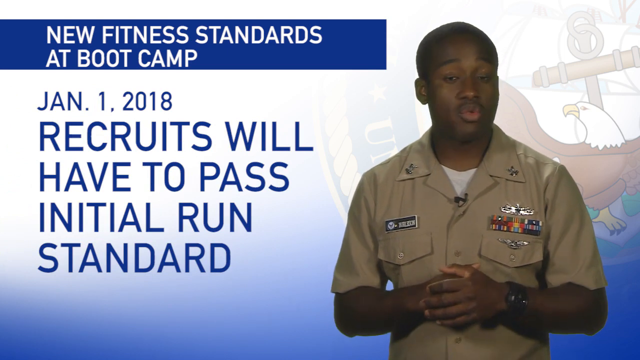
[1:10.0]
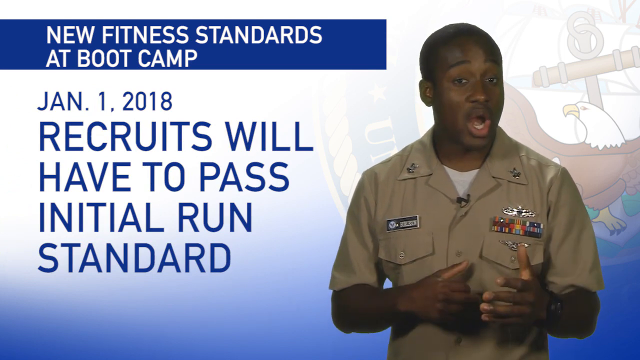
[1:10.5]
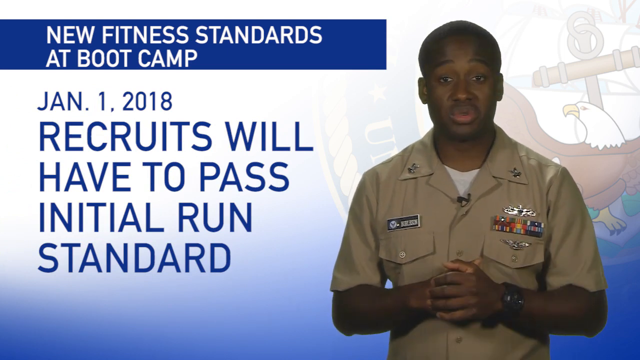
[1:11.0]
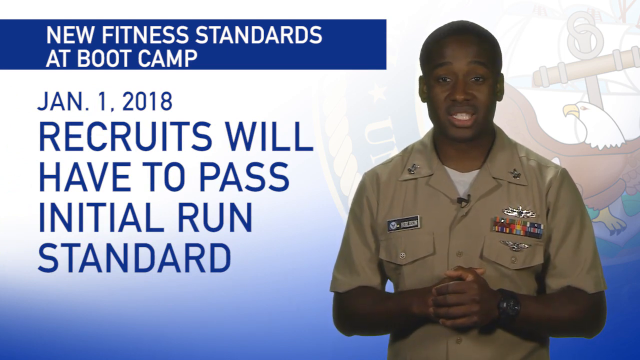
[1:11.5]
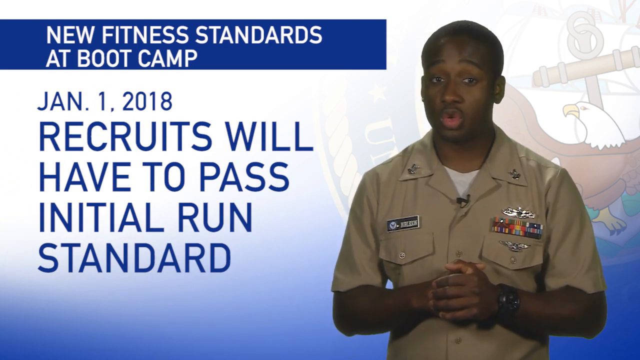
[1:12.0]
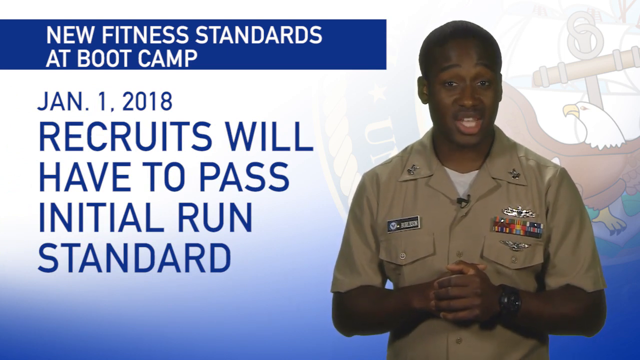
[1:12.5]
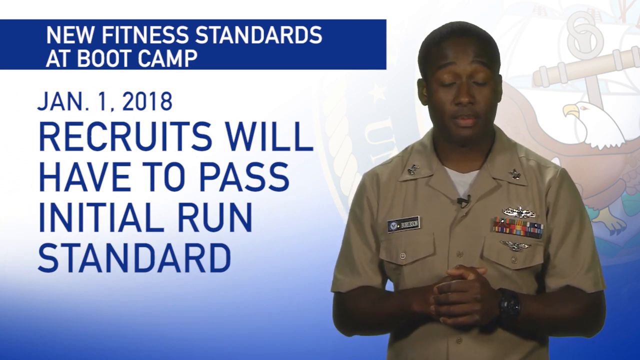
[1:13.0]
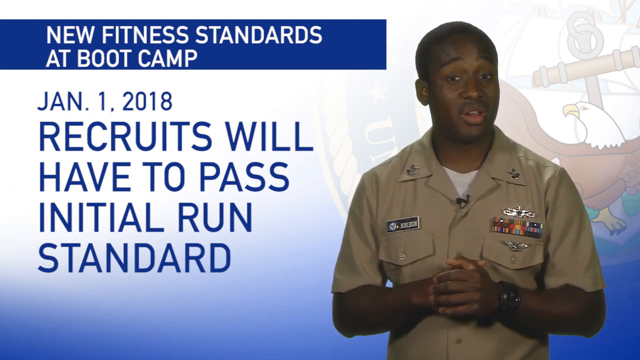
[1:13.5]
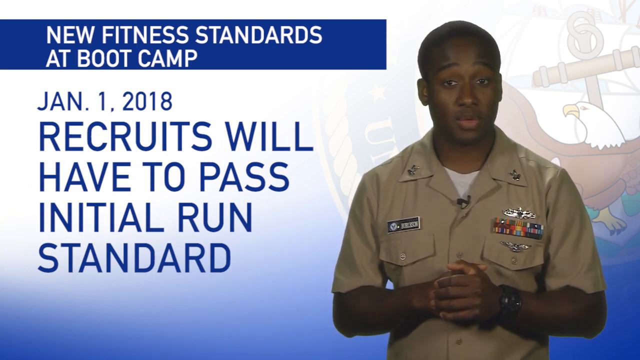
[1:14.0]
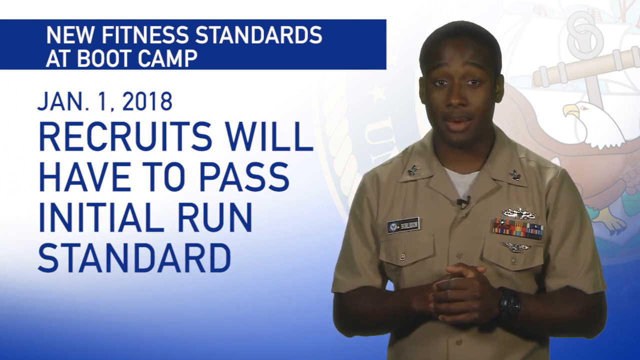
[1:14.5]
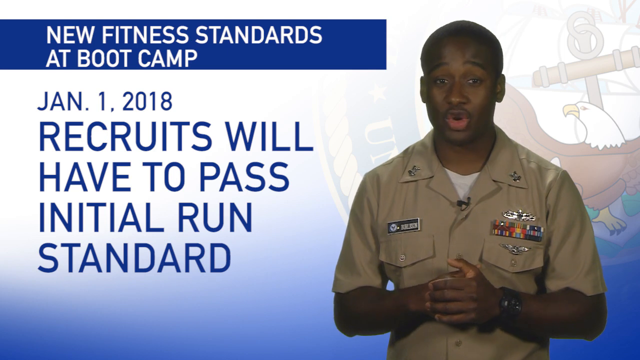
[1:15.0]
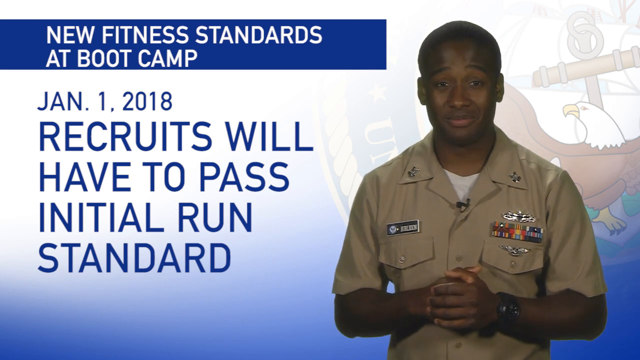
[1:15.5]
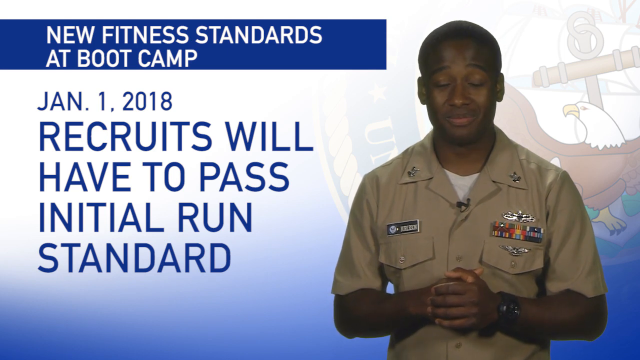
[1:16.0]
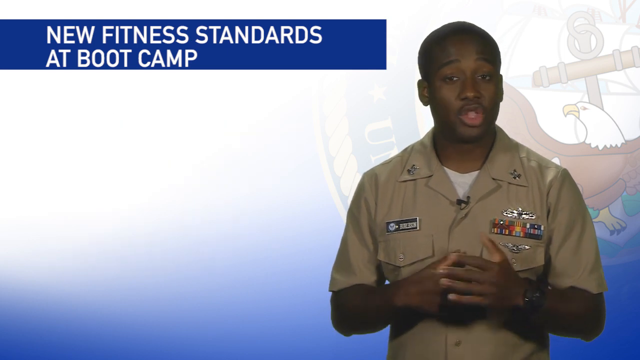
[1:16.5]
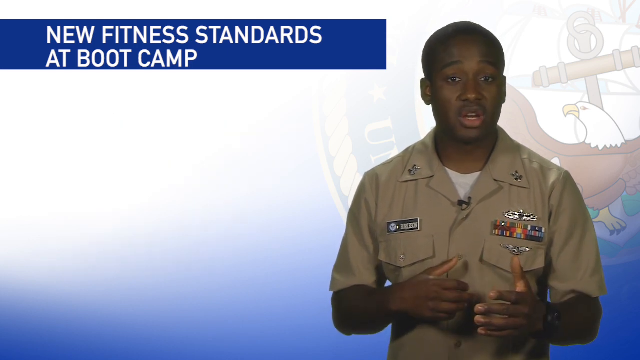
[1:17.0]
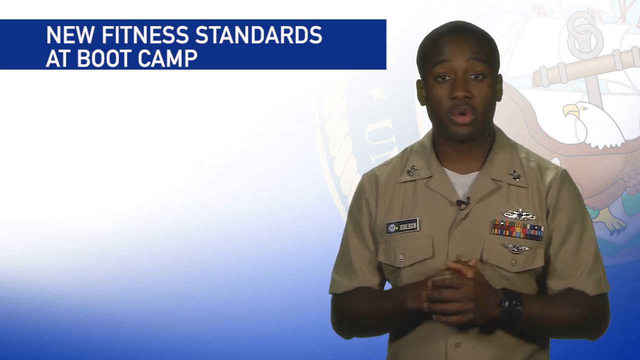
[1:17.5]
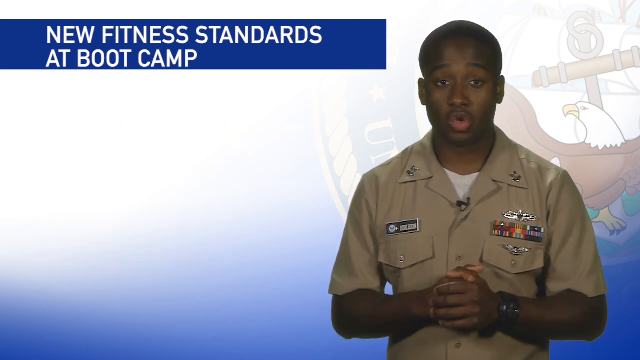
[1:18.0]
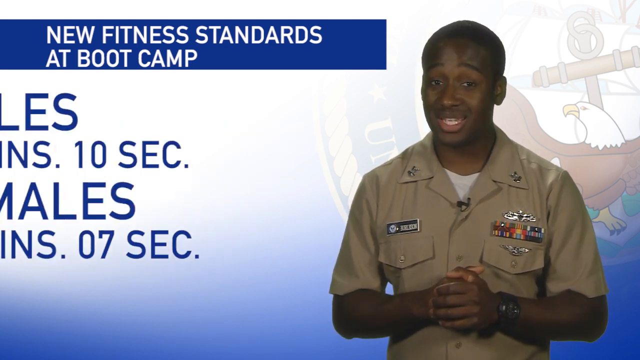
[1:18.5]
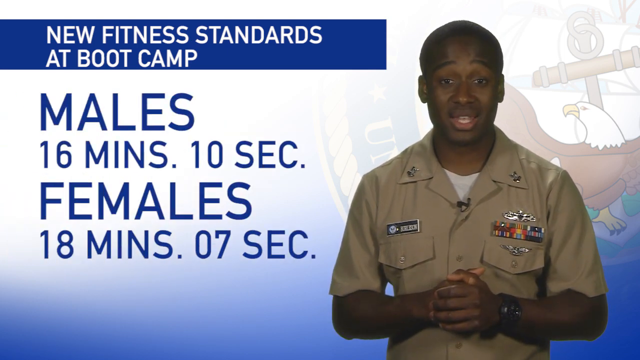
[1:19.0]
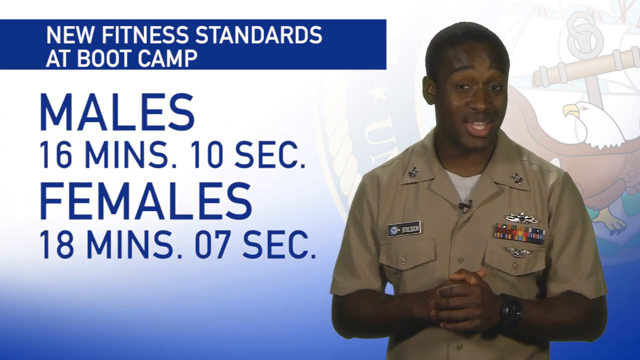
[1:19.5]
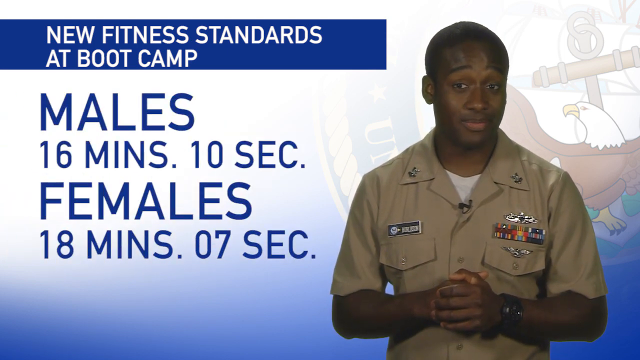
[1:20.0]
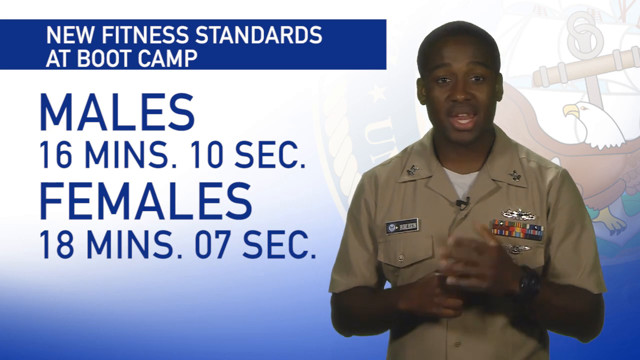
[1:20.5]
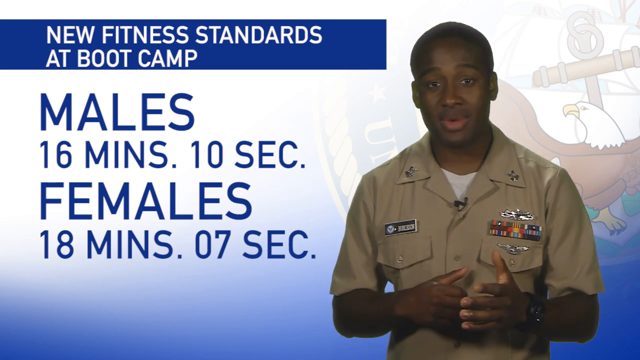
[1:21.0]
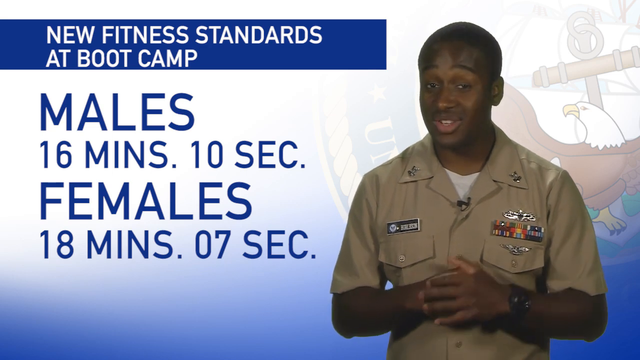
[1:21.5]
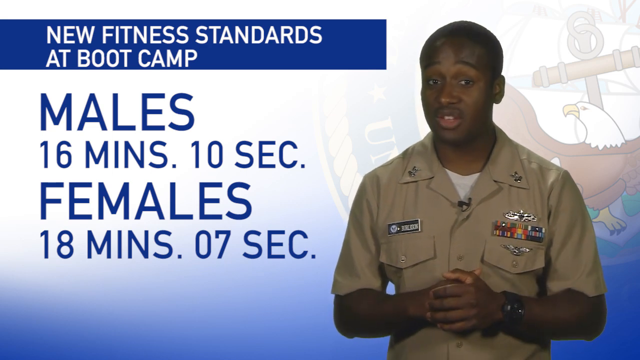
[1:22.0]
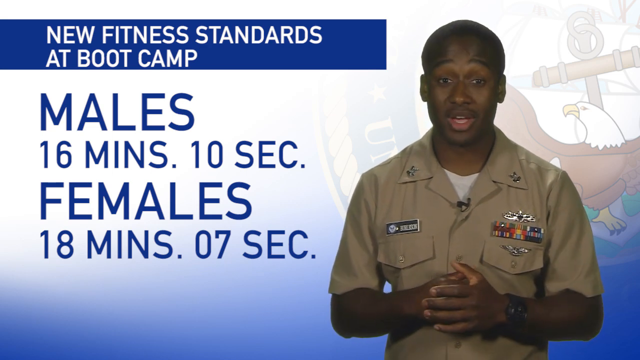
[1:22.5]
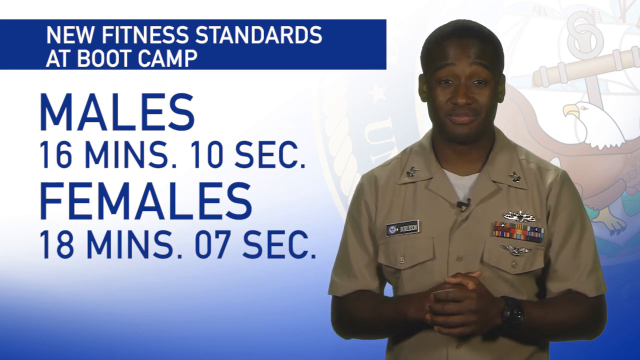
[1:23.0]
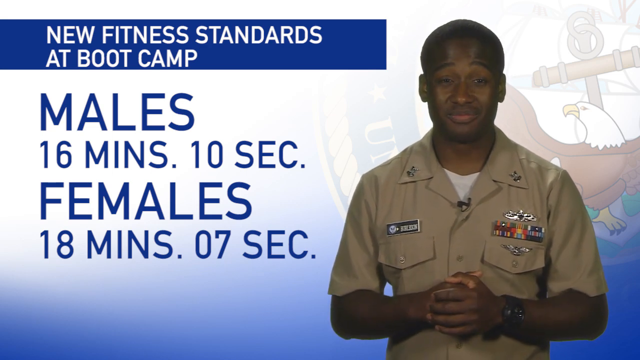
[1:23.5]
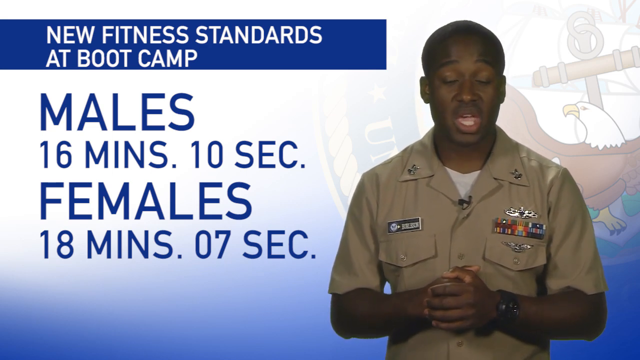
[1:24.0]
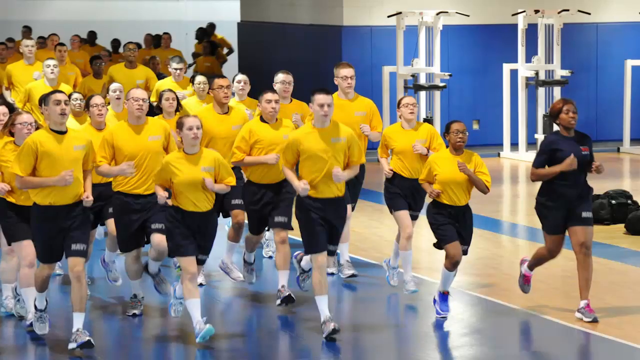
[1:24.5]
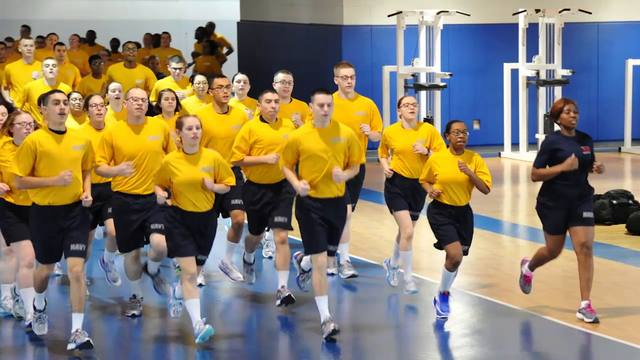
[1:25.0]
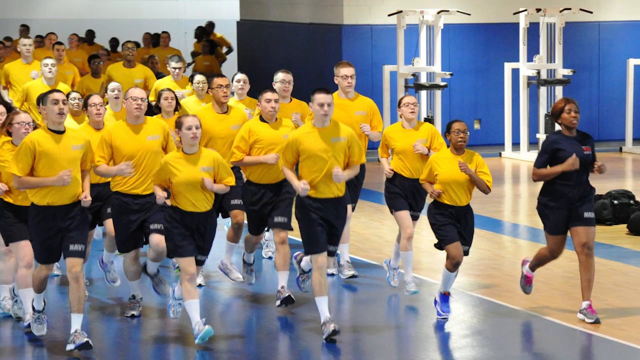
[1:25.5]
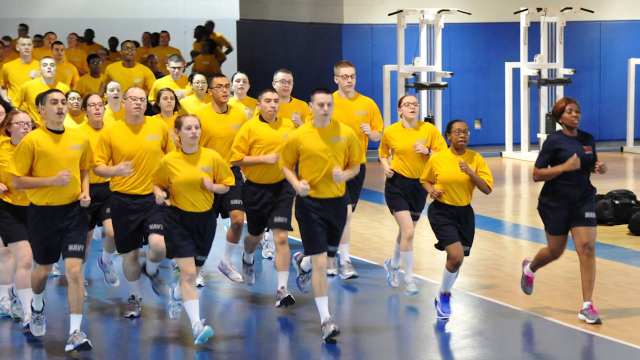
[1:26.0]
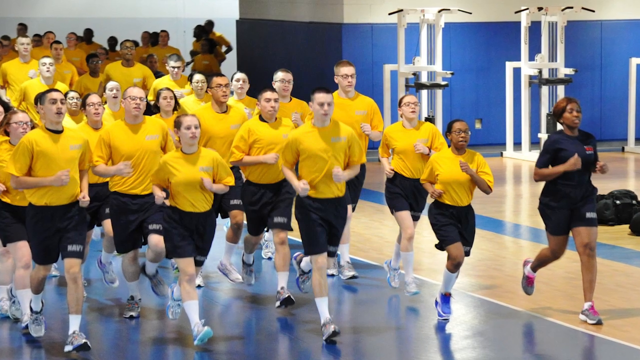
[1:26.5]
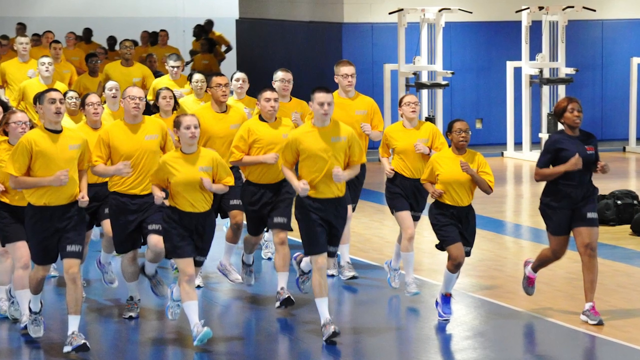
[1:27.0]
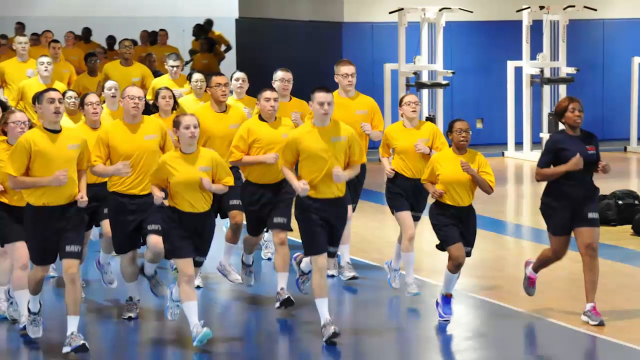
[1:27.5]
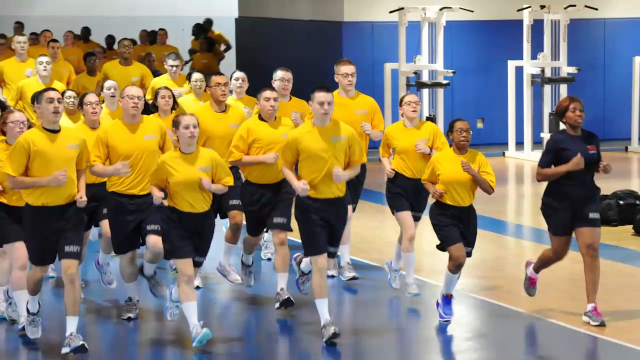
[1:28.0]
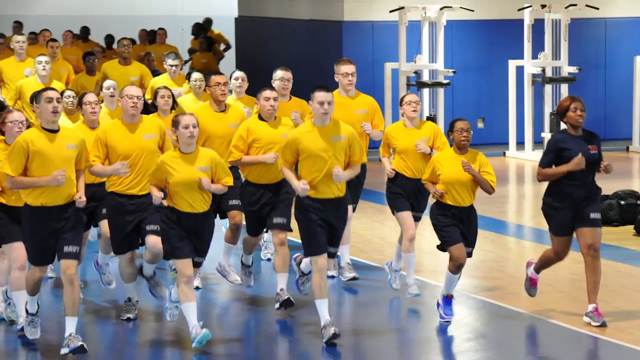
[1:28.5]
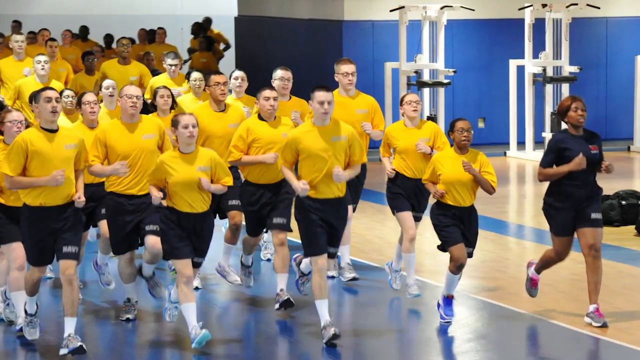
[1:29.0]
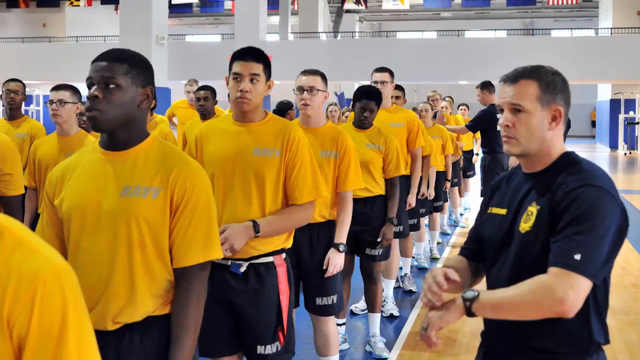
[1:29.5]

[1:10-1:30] A young Black man with a shaved buzz cut wears a brown army shirt with his medals on his chest and his name on a badge. The background is an American government logo with a brown eagle. On the screen it reads "new fitness standards at boot camp," and underneath, "January 1st 2018 recruits will have to pass initial run standard," in blue letters on a white background. The man gestures with his hands as he explains. Text then reads "males 16 minutes point 10 seconds, females 18 minutes point 7 seconds," and the man keeps gesturing. A picture follows of army recruits inside a gym being instructed to run; they all wear yellow t-shirts, black shorts and white socks, and a female instructor leads the way. The background is blue, with some machinery and gym equipment. In the last scene the same recruits, in yellow t-shirts and dark shorts, stand facing the front with instructors all around timing them; they are still inside the gym and look pretty tired.